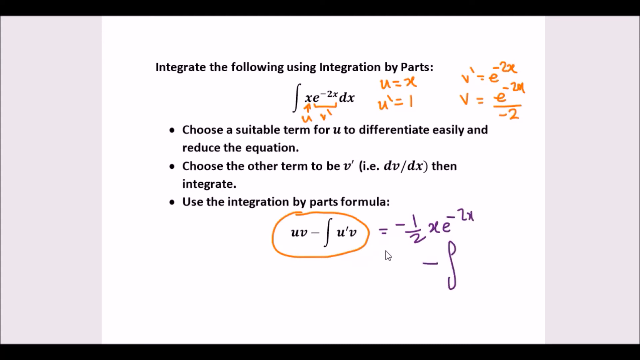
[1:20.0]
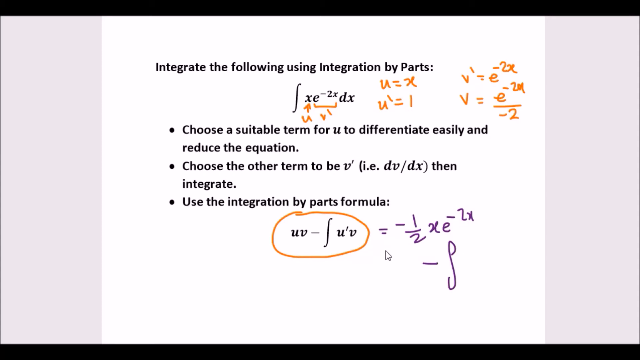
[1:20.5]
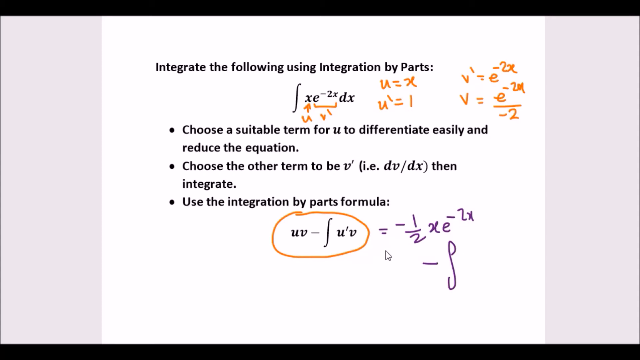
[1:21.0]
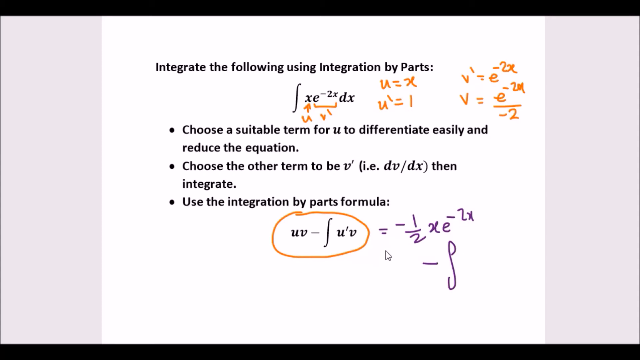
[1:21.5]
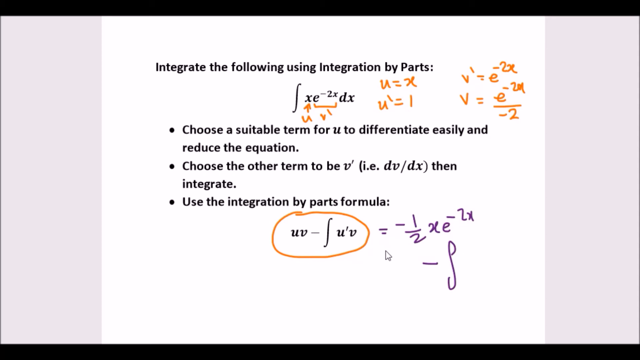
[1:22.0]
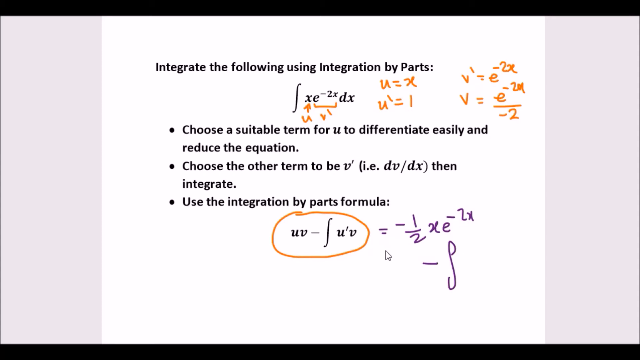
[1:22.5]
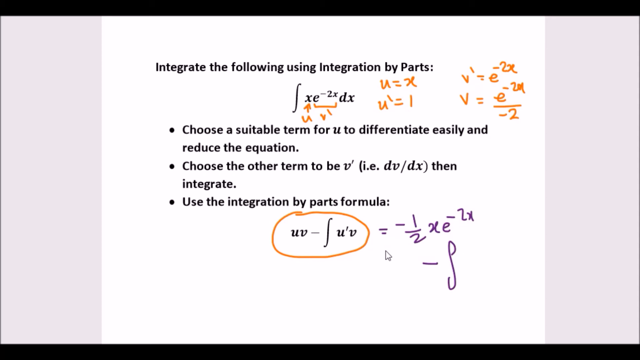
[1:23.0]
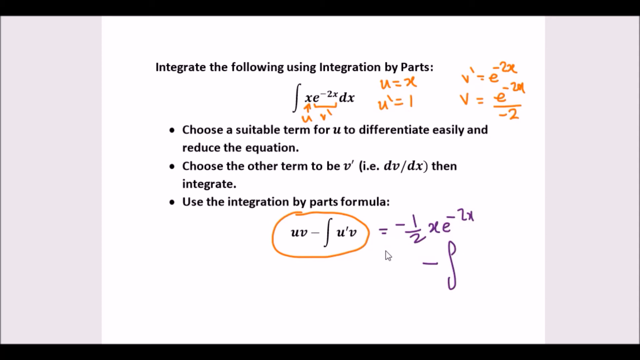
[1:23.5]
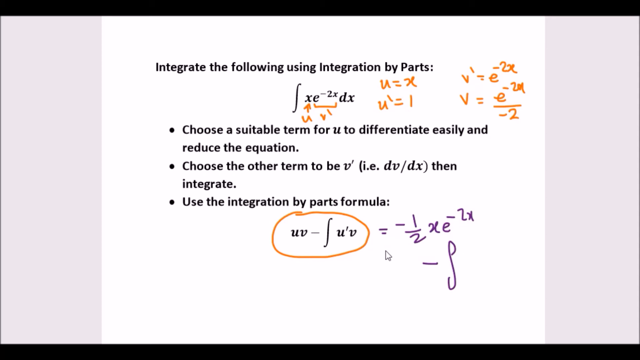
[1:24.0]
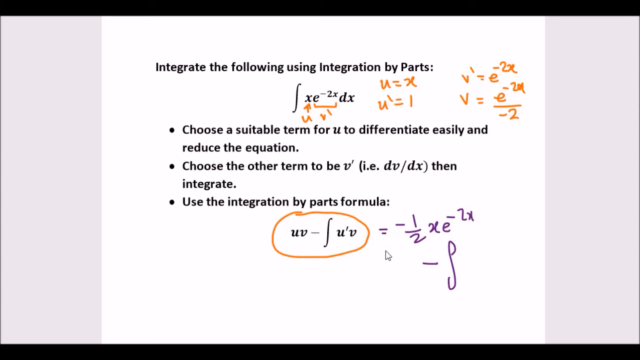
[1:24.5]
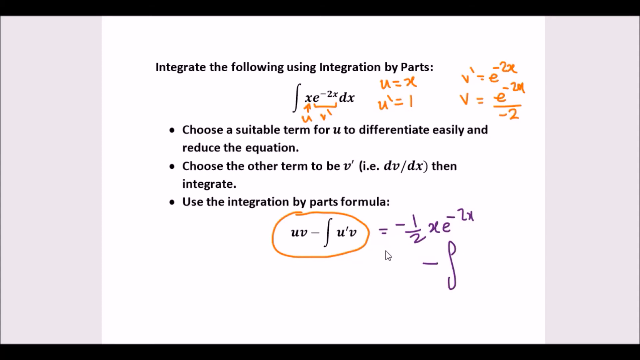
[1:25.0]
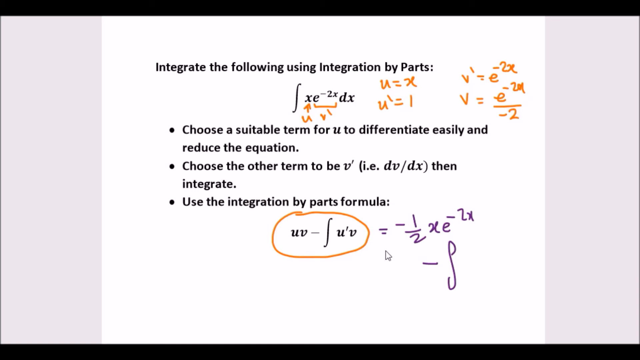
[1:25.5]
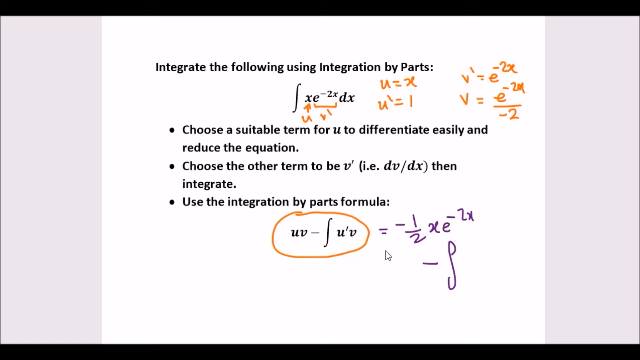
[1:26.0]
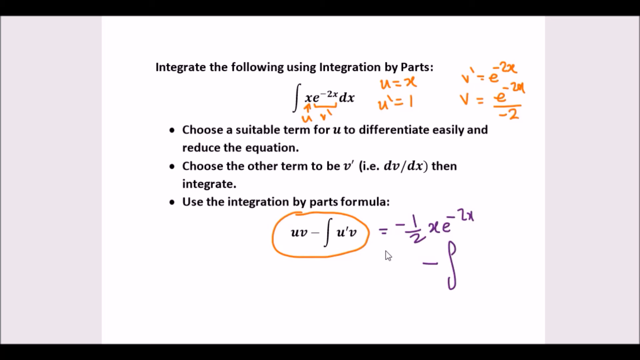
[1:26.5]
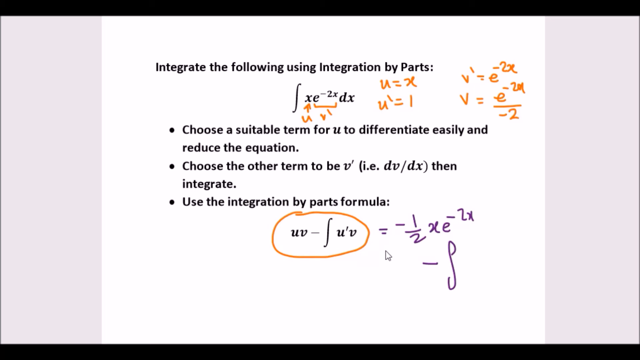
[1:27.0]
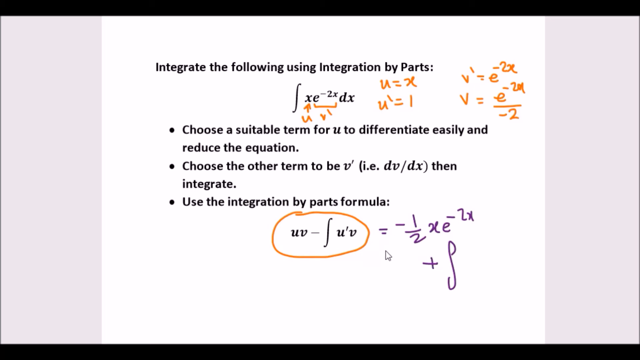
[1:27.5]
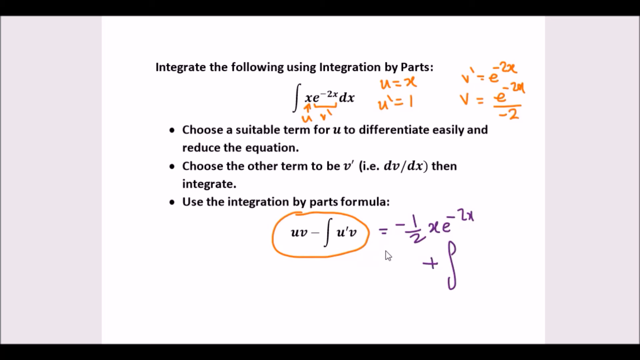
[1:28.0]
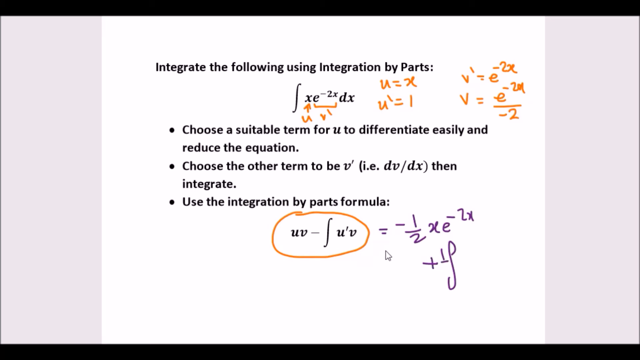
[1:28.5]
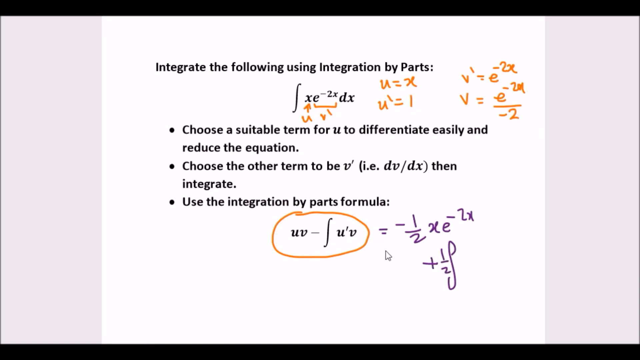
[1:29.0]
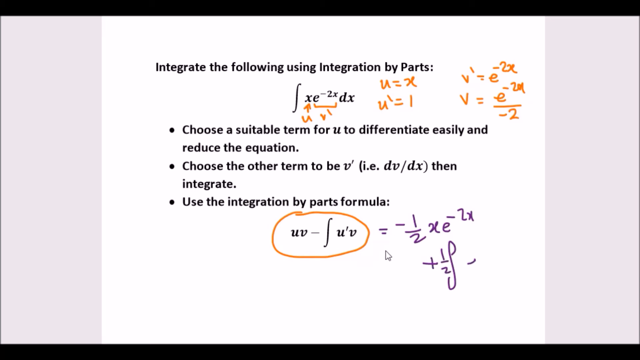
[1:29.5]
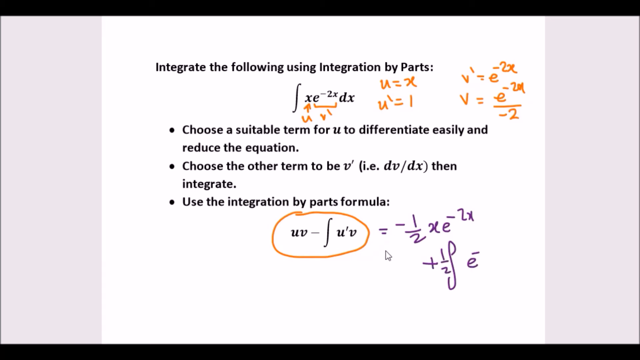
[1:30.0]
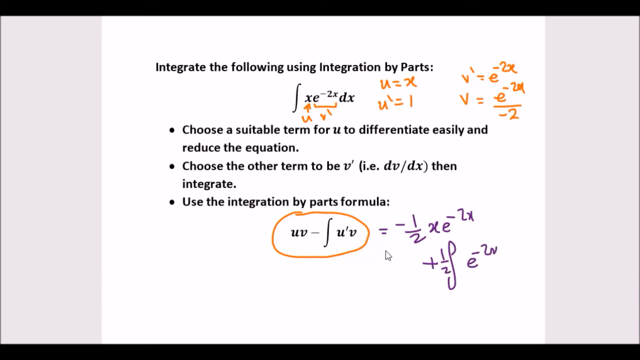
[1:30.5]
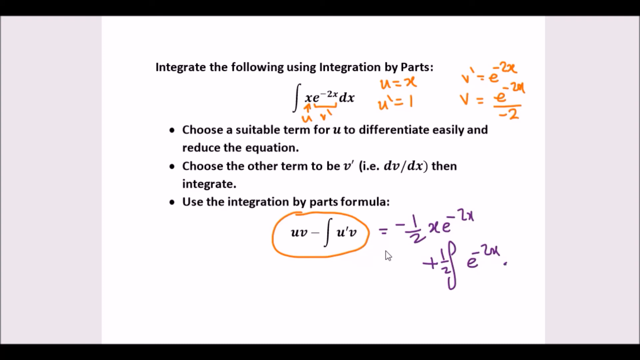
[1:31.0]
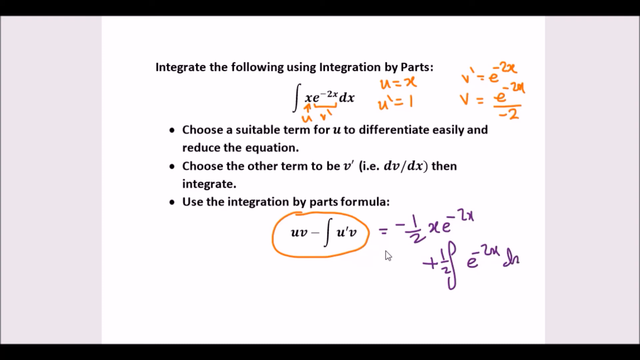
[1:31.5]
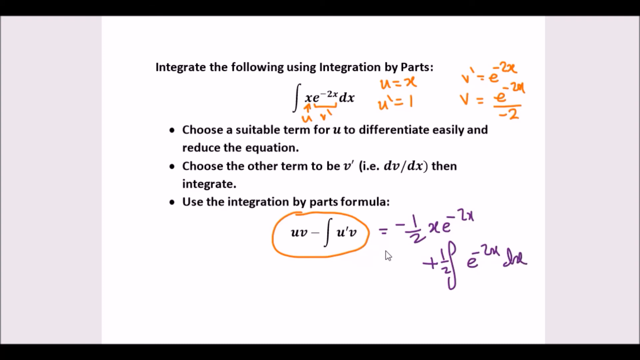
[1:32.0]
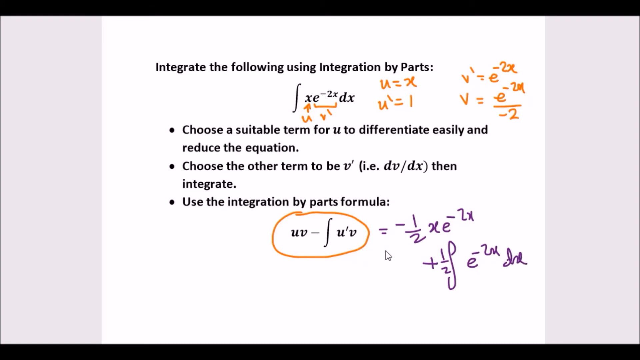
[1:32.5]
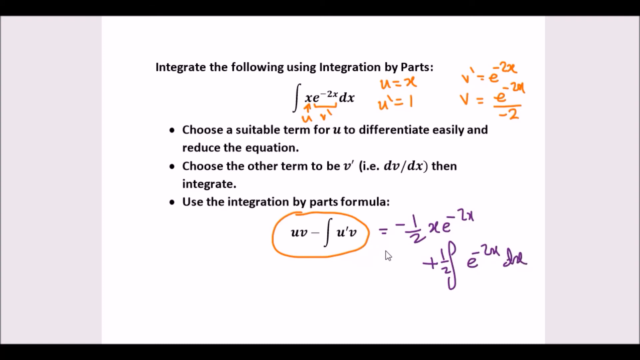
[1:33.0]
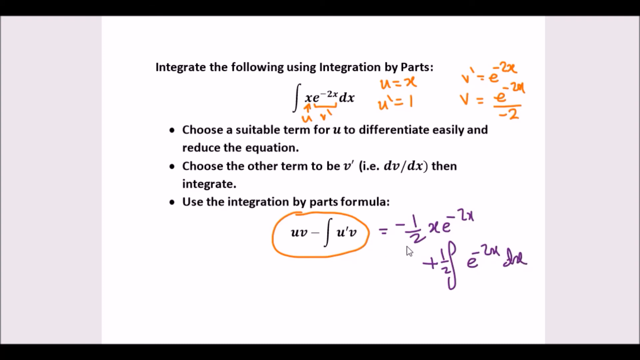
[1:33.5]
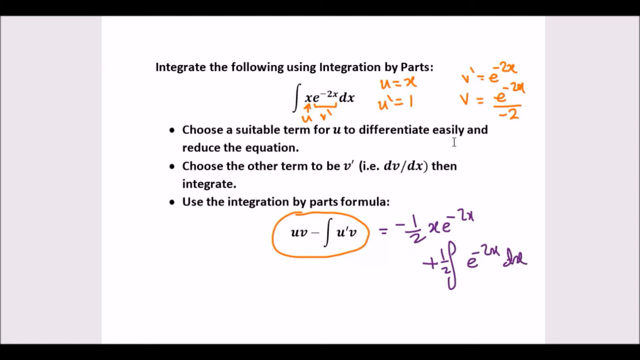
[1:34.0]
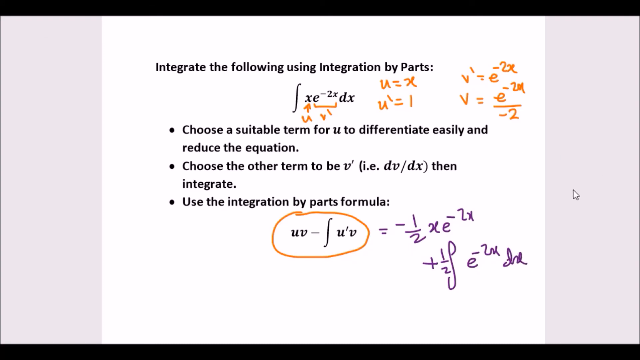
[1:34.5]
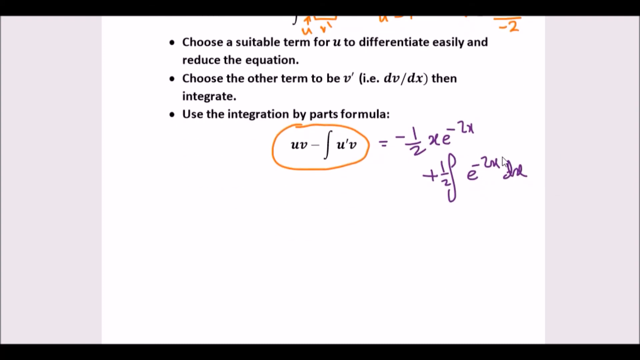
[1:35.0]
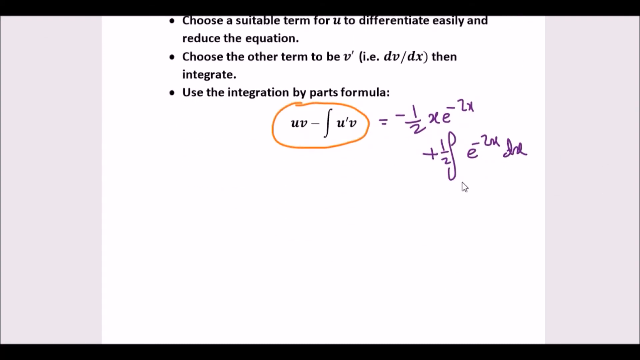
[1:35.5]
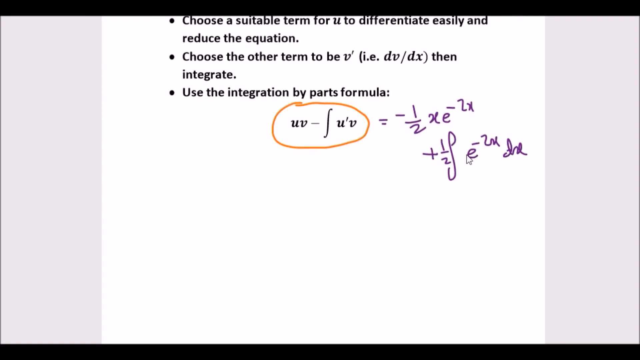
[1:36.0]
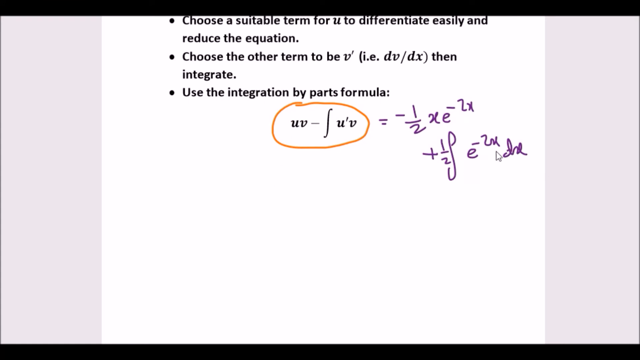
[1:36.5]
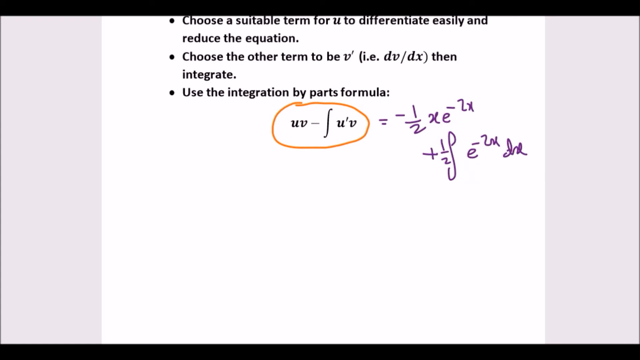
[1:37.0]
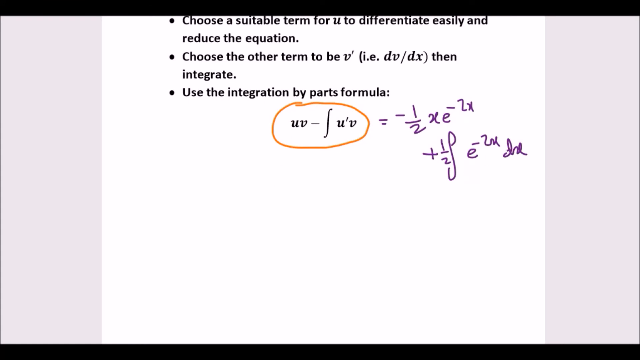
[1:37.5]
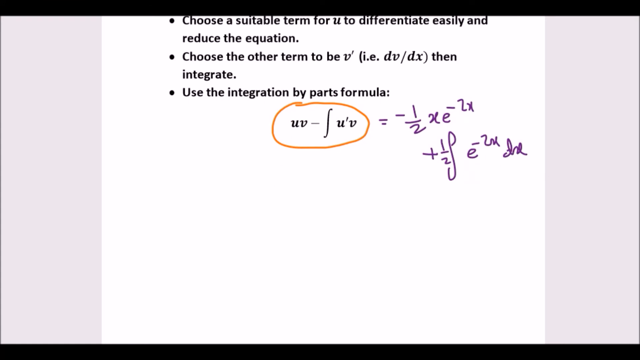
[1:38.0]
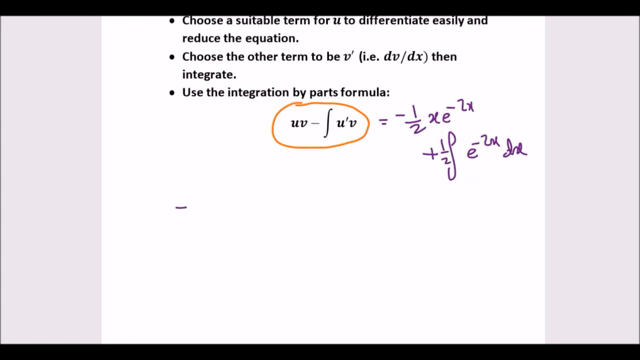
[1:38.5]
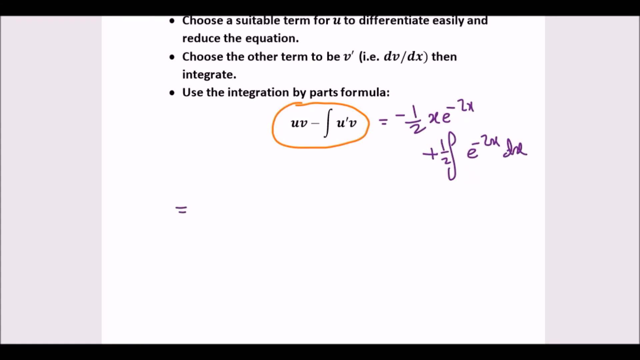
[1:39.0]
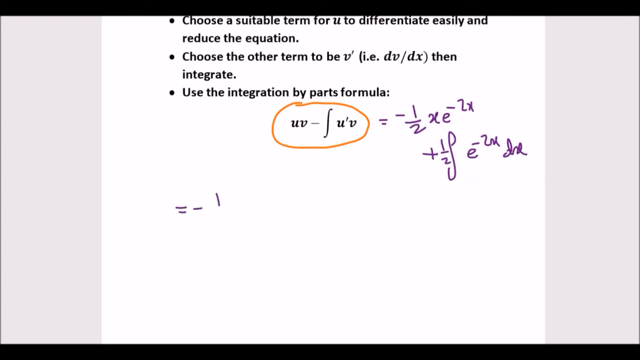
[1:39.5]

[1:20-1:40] The user continues the expression minus 1 over 2 times x times e to the minus 2x, minus an integral that is not yet written. After a pause, the minus sign is changed to a plus sign, and the user writes a half times the integral of e to the minus 2x times the derivative of x. The user then moves to the bottom of the slide, where there is more space, and starts a new line beginning with an equal sign and a minus 1, but the video cuts just as this new equation begins.